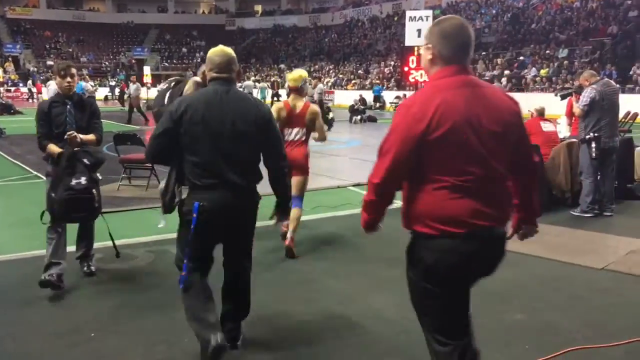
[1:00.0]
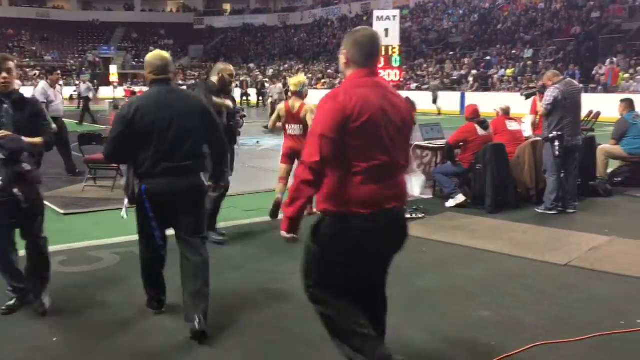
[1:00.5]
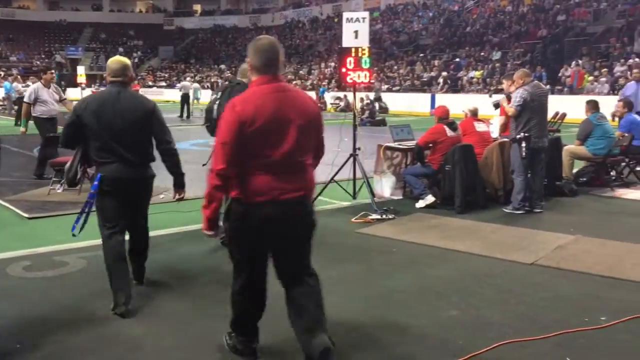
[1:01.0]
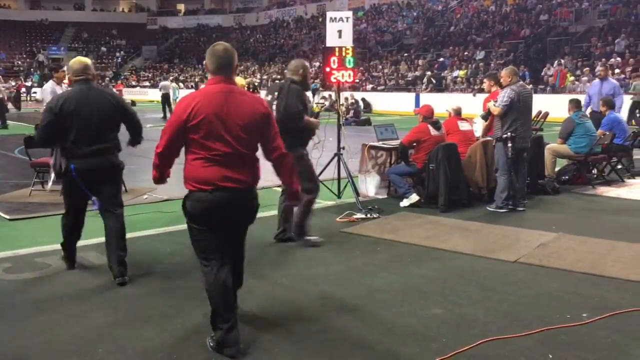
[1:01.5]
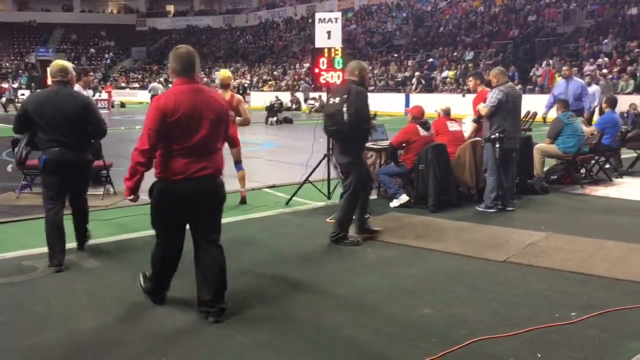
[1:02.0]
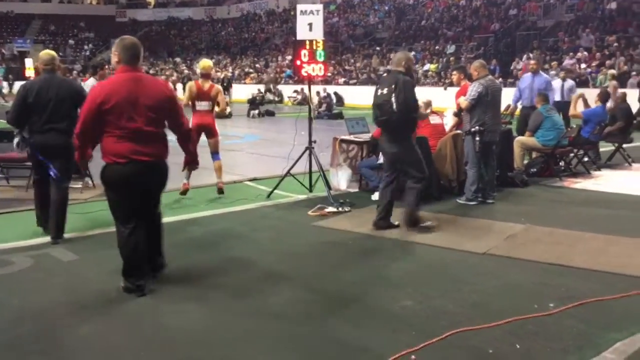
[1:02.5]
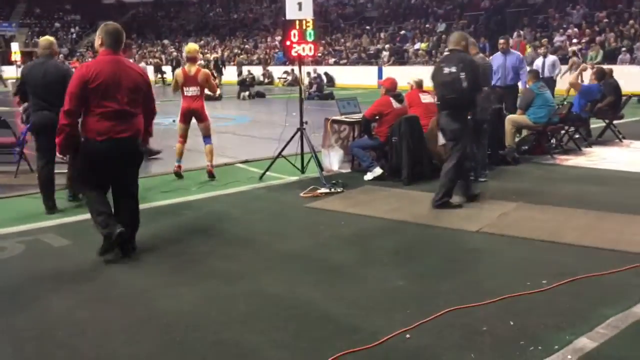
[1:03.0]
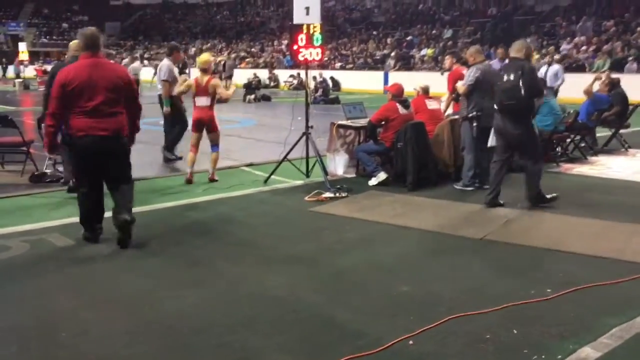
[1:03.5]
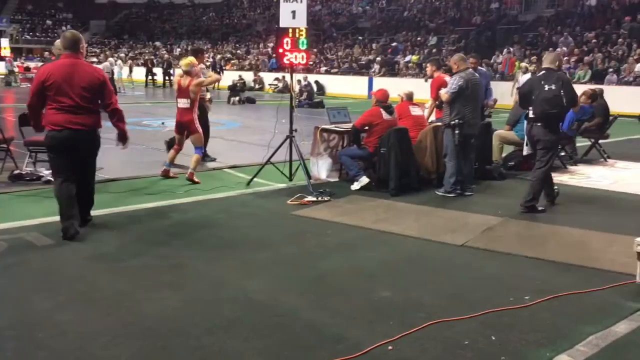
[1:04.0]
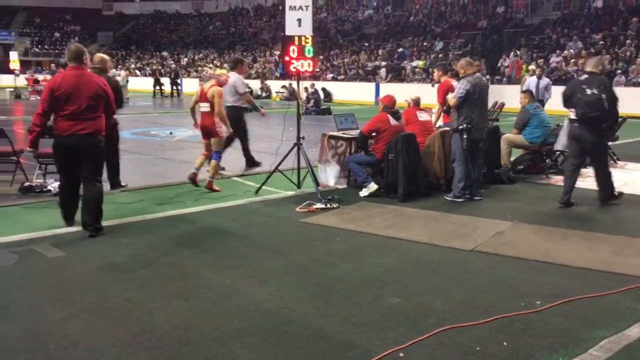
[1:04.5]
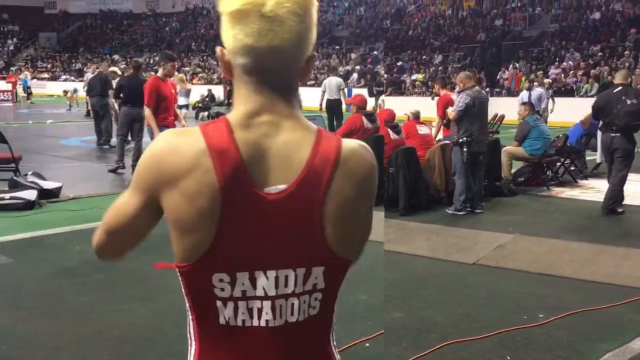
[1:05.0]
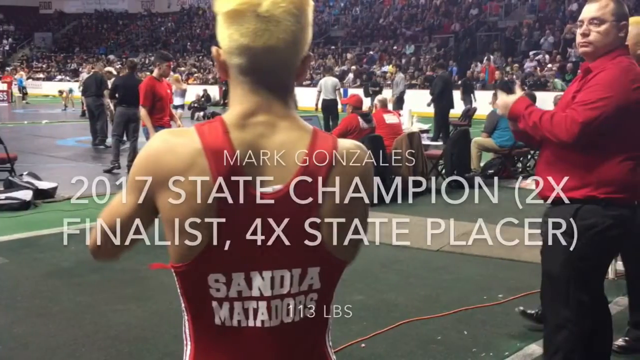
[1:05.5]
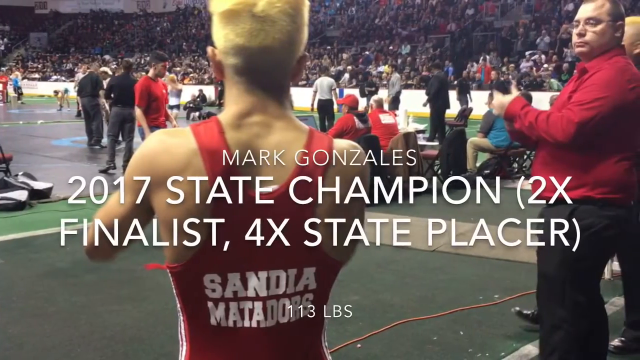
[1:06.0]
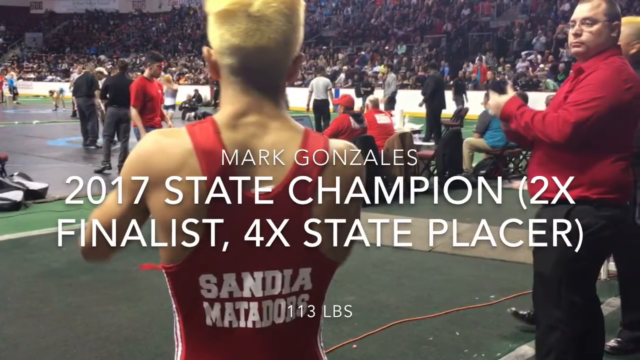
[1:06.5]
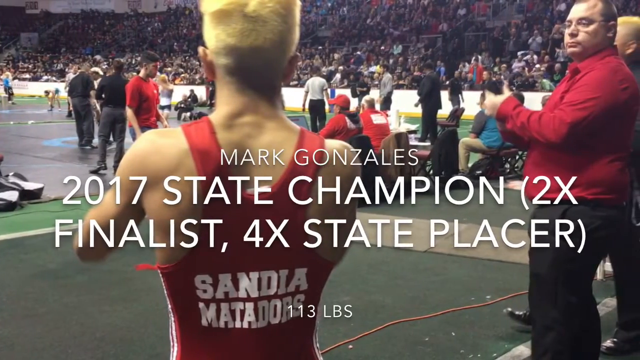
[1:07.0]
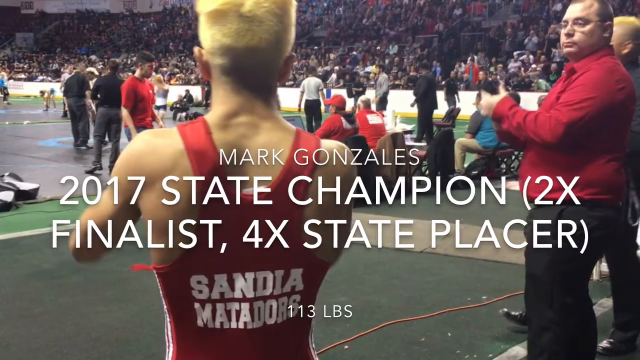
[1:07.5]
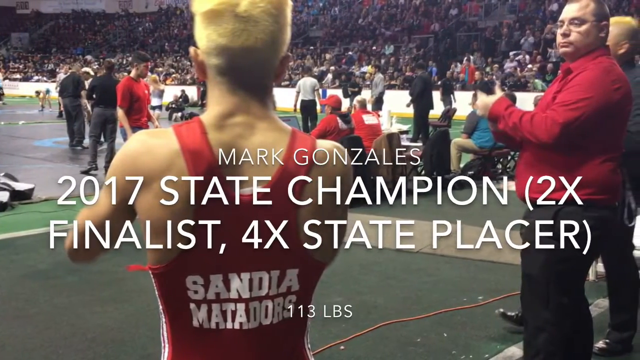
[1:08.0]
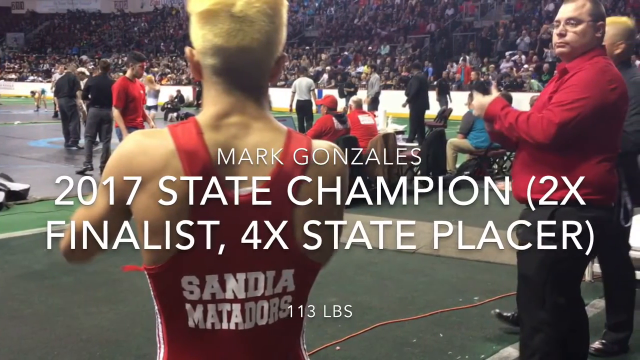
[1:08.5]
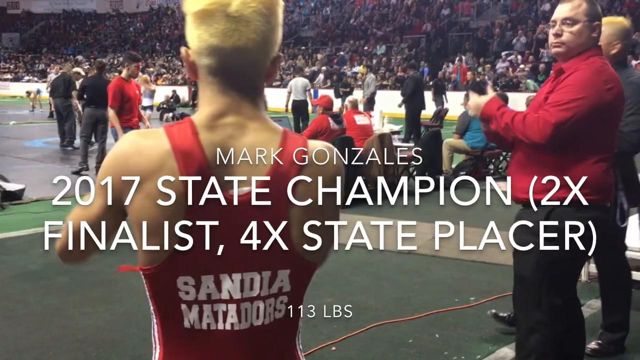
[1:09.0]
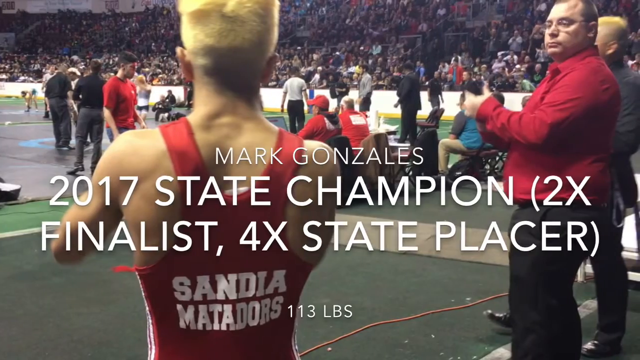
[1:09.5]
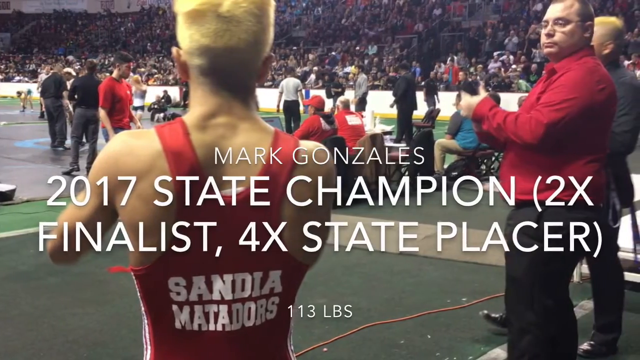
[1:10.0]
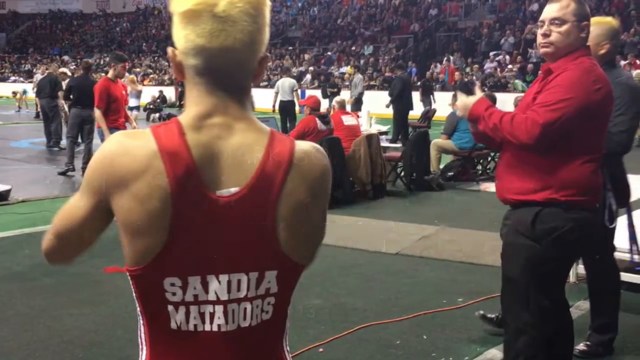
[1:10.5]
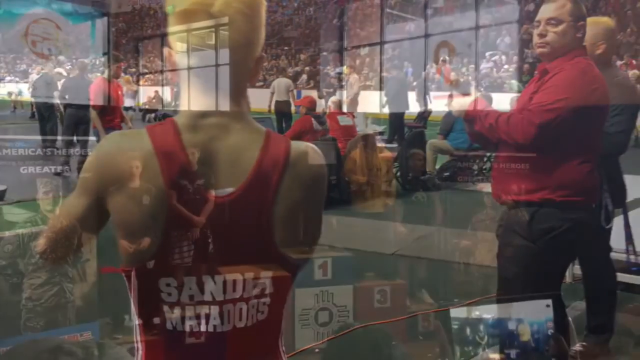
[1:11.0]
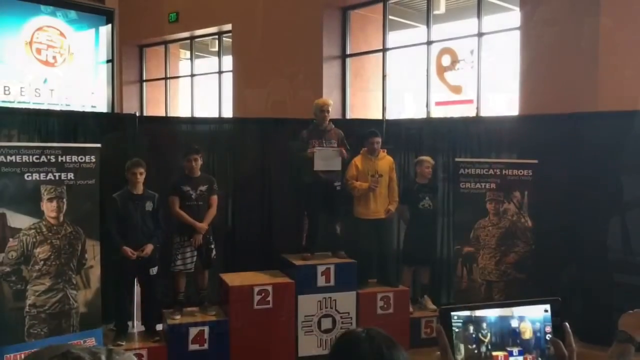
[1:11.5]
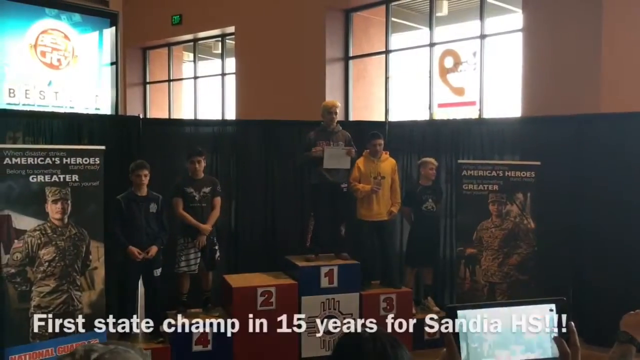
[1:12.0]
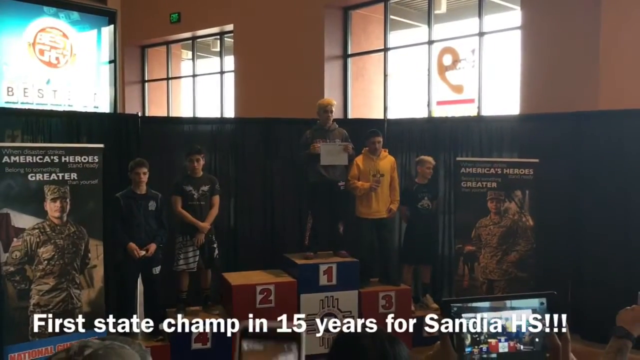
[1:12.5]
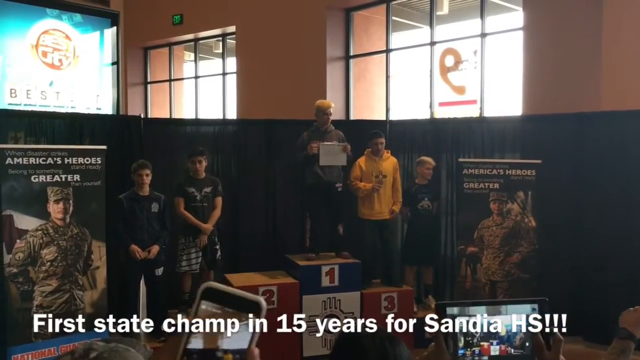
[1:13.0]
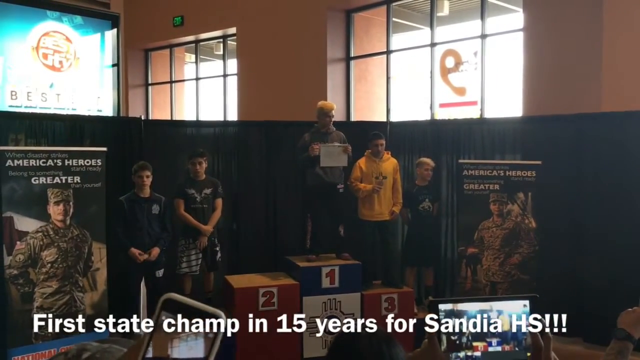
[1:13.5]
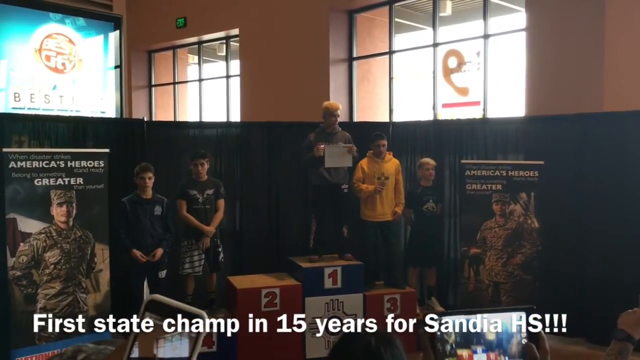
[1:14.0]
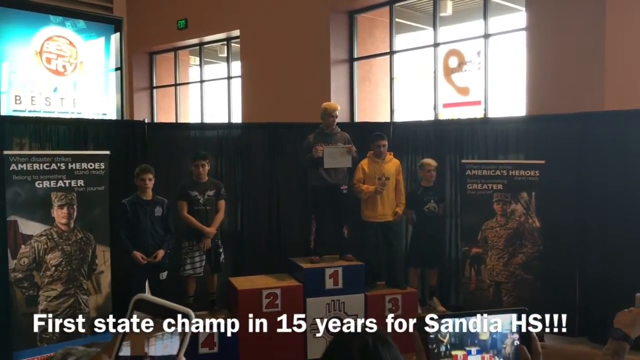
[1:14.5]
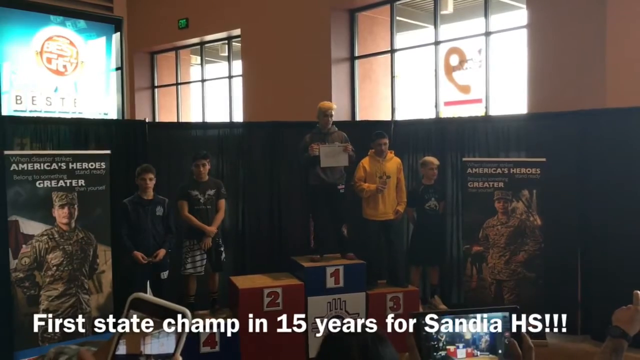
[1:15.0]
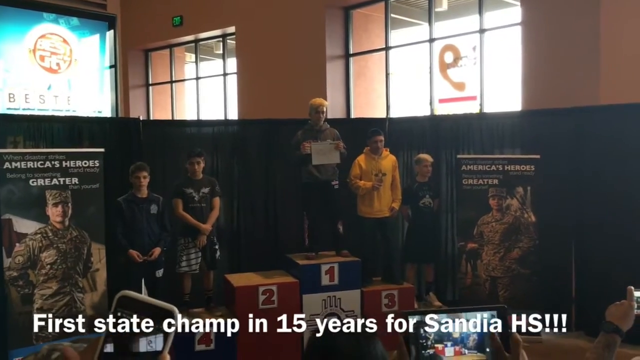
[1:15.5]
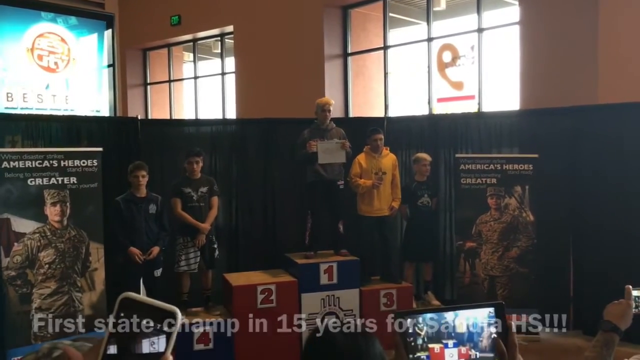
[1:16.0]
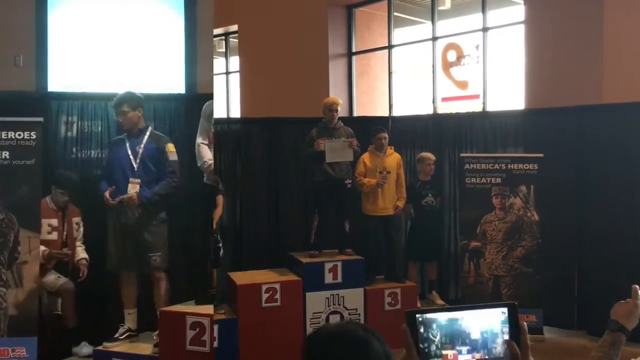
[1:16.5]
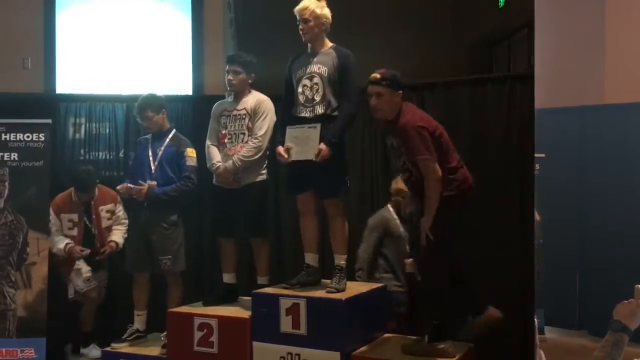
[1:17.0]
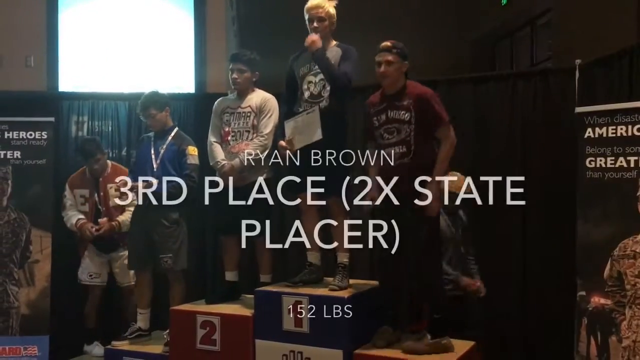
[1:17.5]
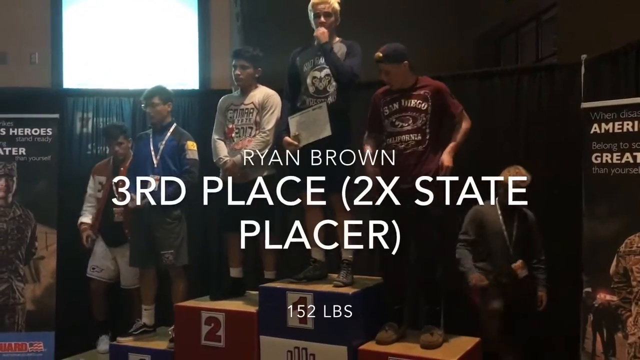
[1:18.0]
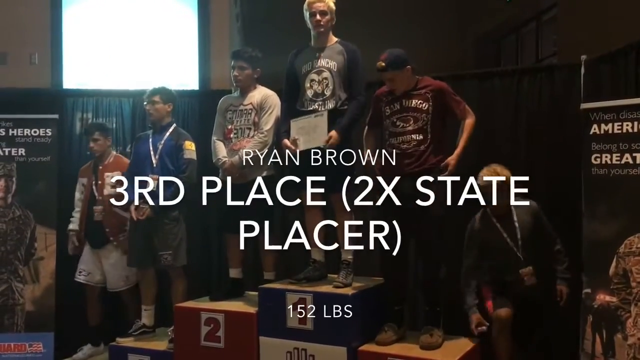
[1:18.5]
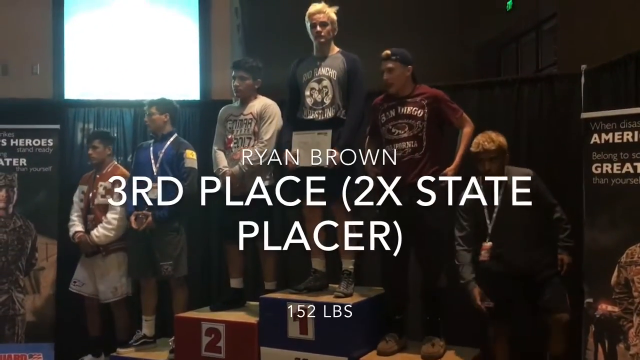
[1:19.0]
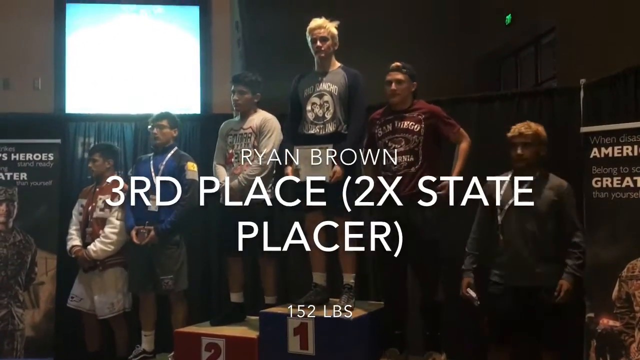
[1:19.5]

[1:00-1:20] The wrestler runs up to the mat and, at its edge, warms up with small jumping jacks and by raising his arms above his head. The video then transitions to his name: Mark Gonzalez, 2017 state champion, two-time finalist, four-time state placer, 113 pounds.